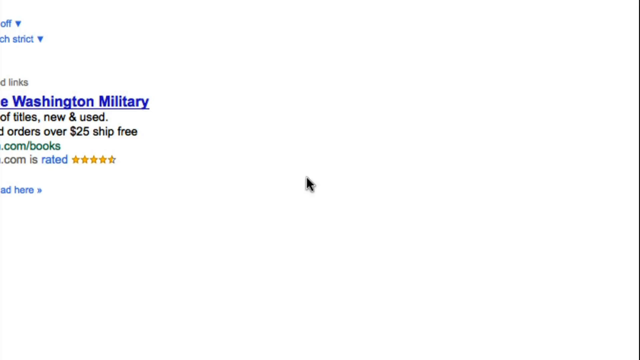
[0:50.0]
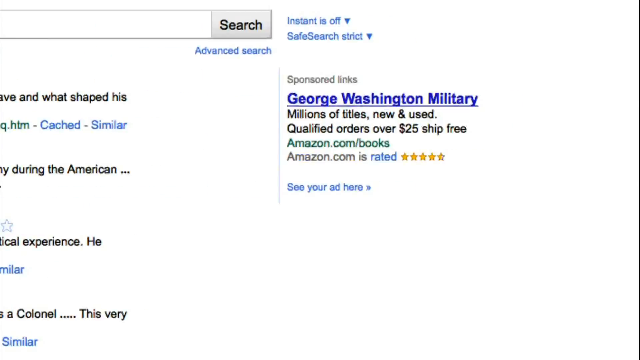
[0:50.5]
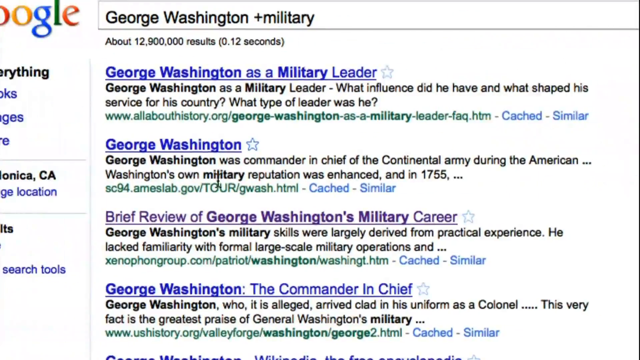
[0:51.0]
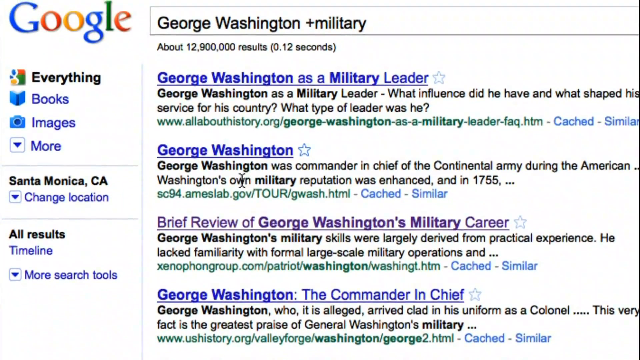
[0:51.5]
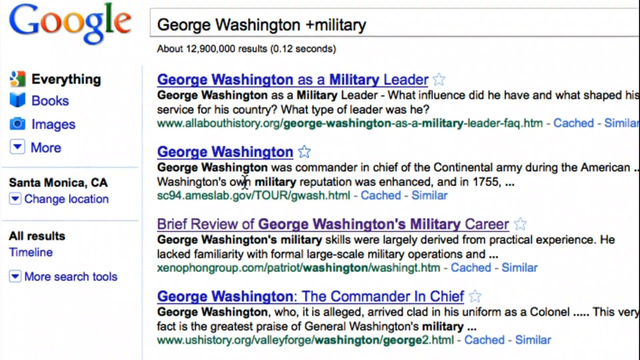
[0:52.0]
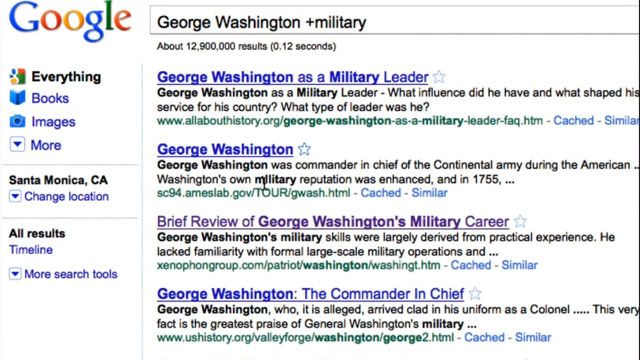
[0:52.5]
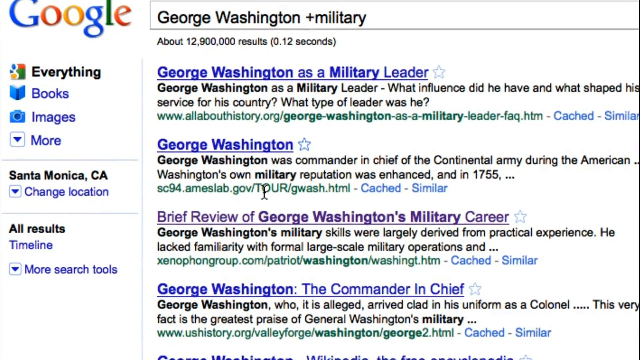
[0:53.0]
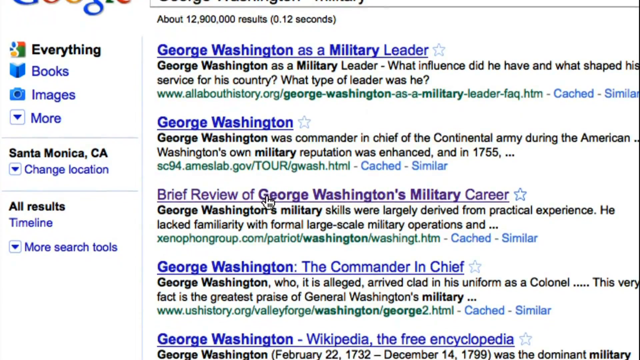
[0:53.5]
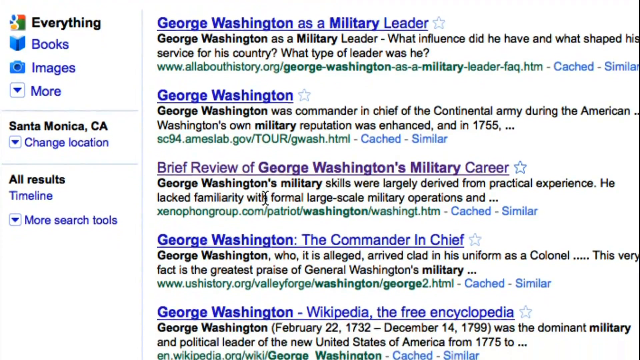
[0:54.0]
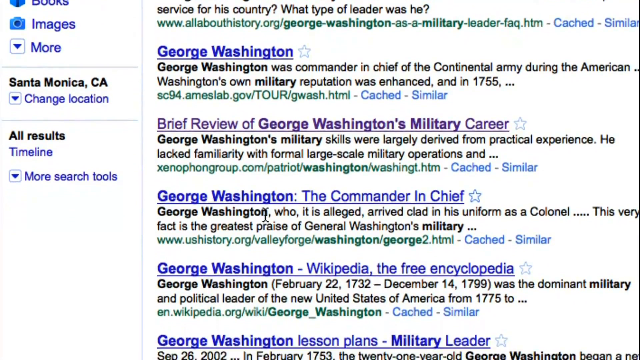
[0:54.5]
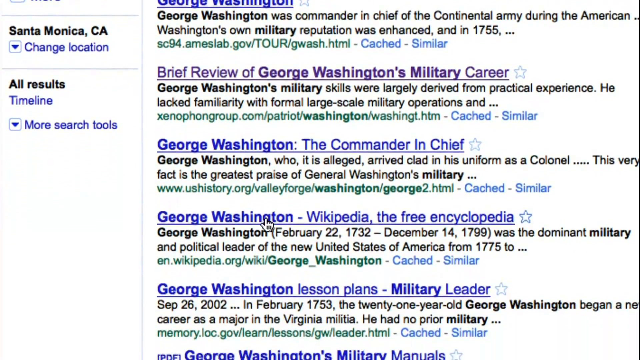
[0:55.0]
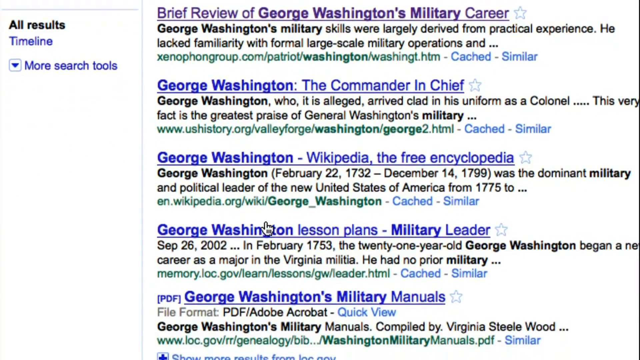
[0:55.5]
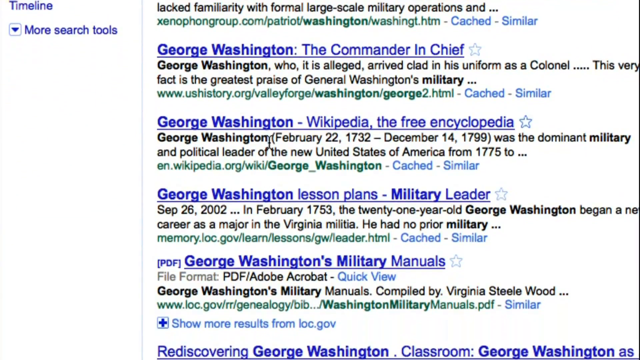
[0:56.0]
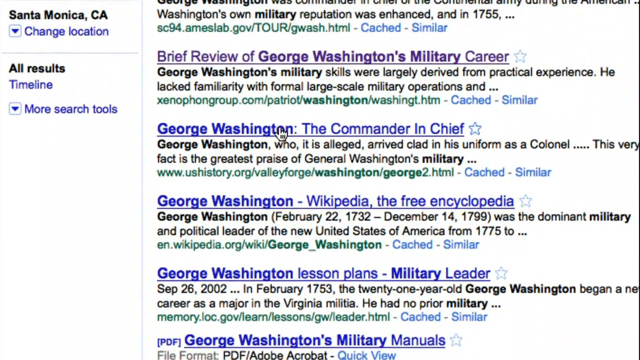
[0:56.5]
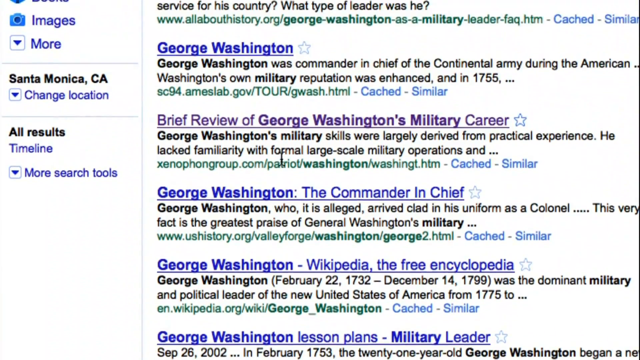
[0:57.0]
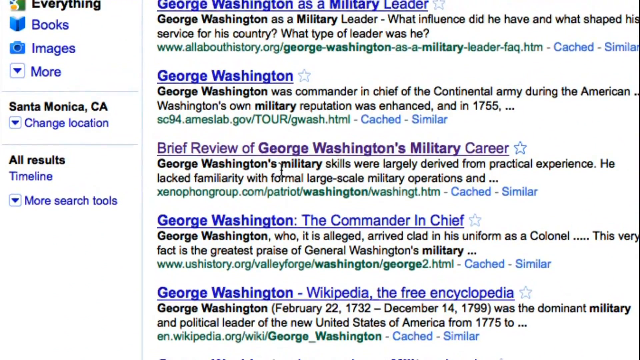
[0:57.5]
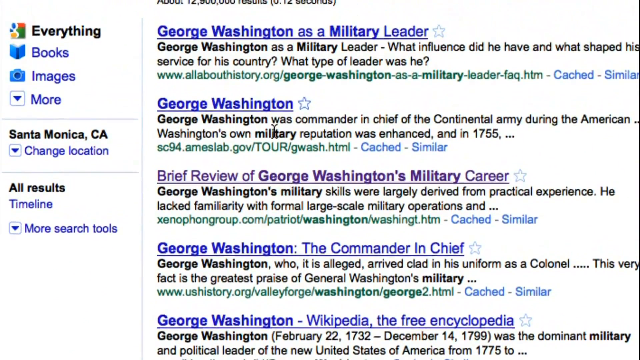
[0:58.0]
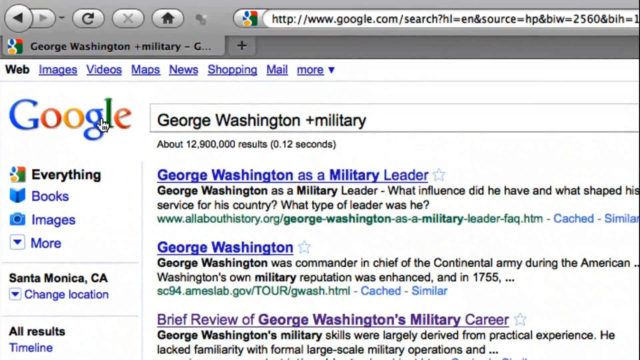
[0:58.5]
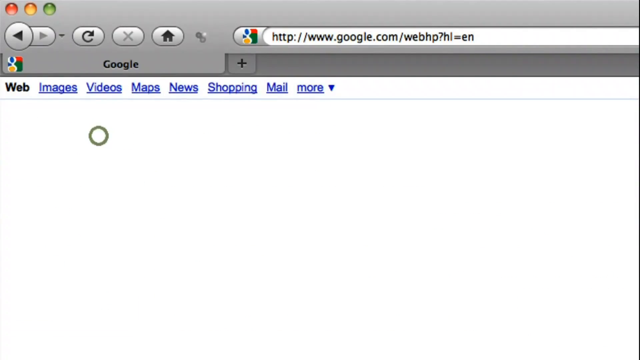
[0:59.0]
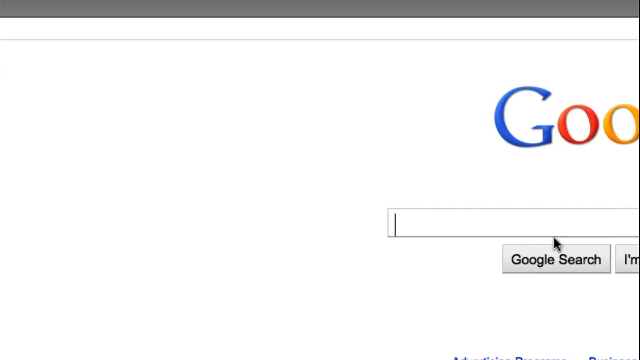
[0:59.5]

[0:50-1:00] A desktop computer screen shows a Google search results page for a search on George Washington plus military, listing 12,900,000 results in 4.12 seconds. The mouse cursor hovers over the second result, beneath which information reads "George Washington was commander-in-chief of the continental army during the American." The cursor scrolls downward over about five results before slowly scrolling back up. The mouse then clicks on the Google icon, and a new search page pops up with the Google logo above an empty search box.